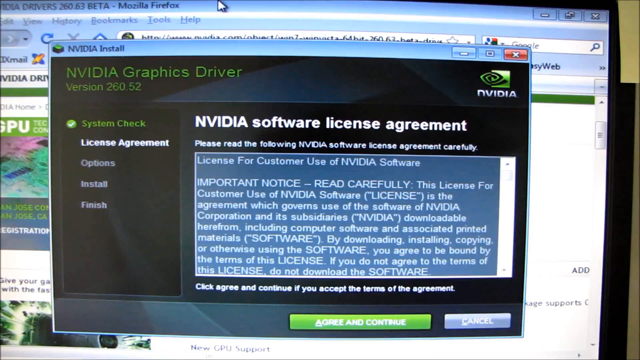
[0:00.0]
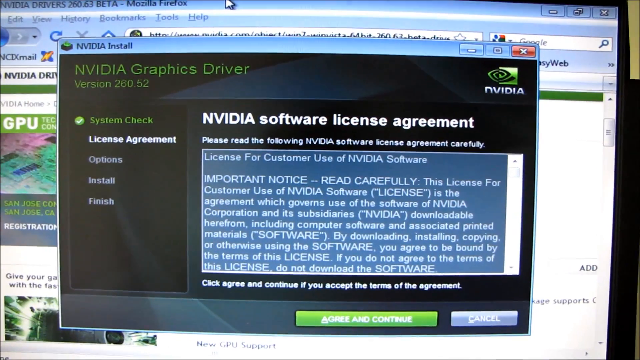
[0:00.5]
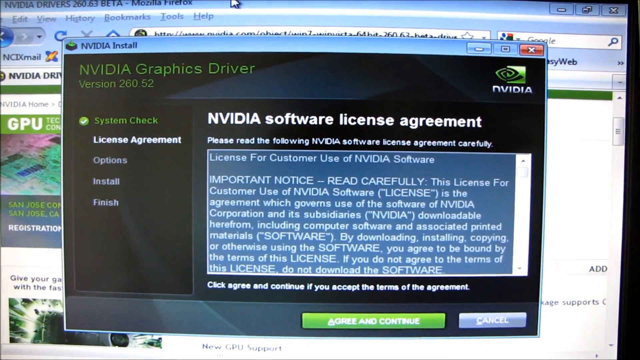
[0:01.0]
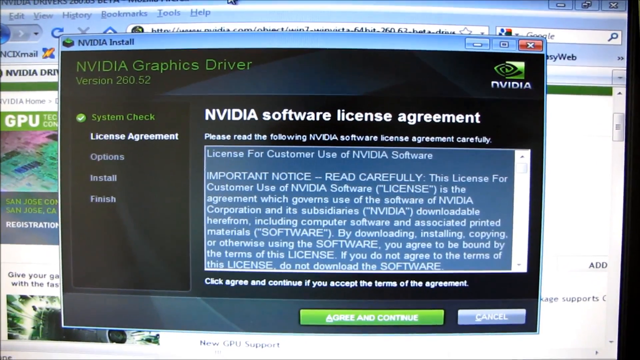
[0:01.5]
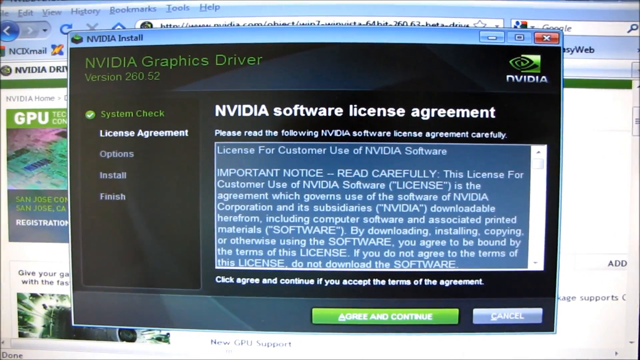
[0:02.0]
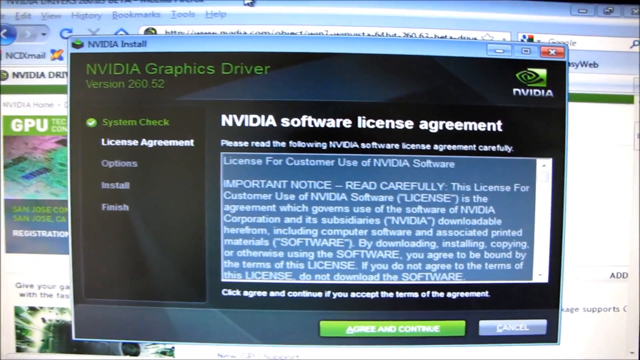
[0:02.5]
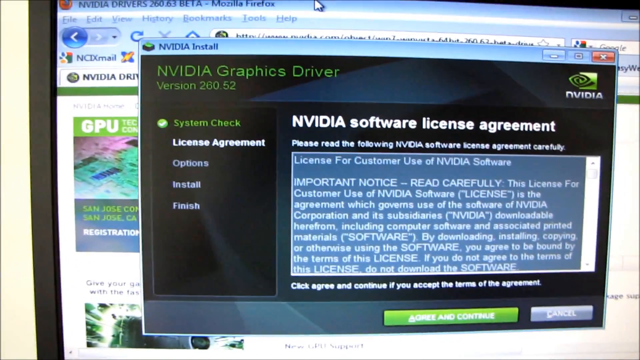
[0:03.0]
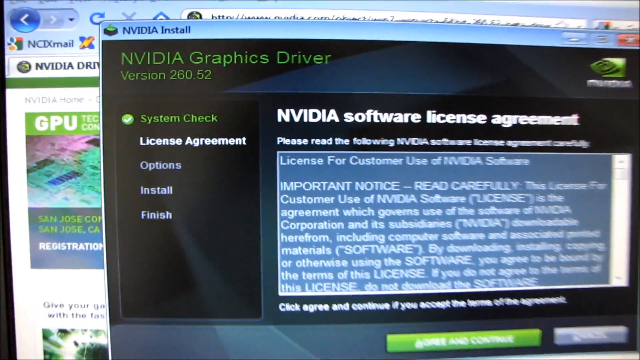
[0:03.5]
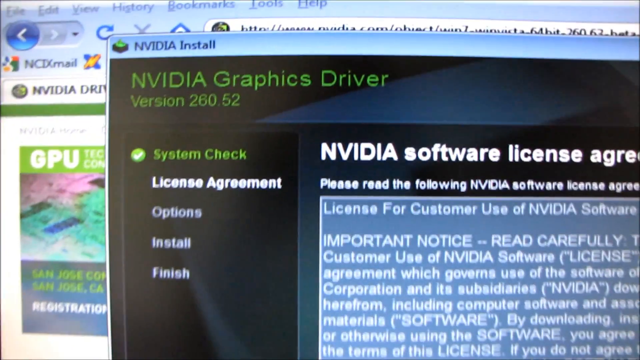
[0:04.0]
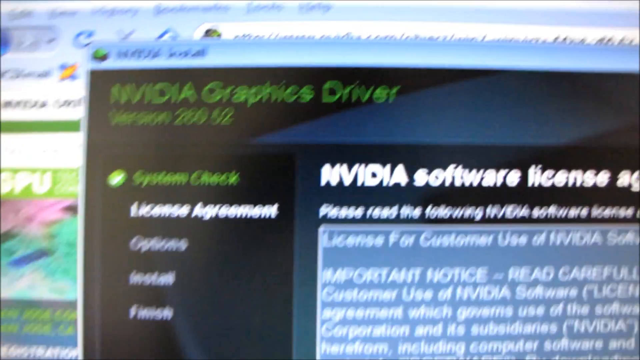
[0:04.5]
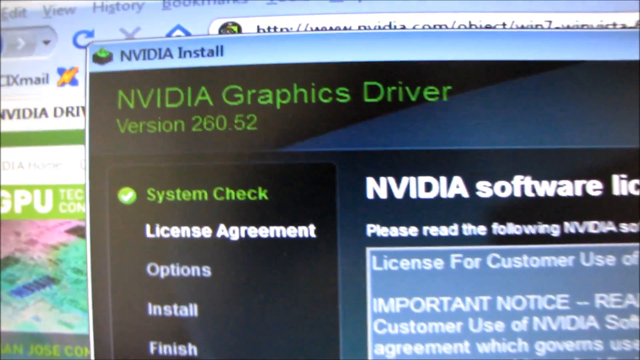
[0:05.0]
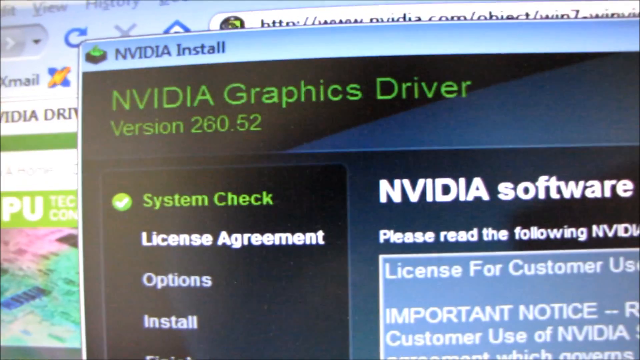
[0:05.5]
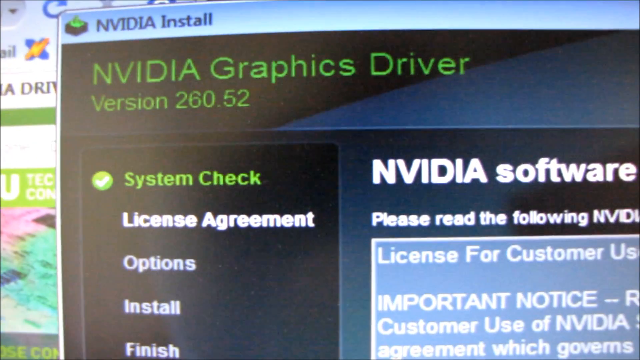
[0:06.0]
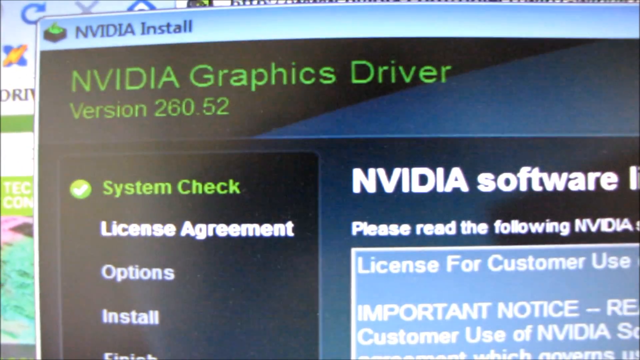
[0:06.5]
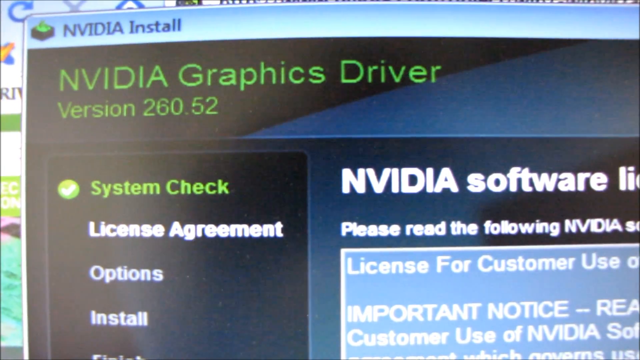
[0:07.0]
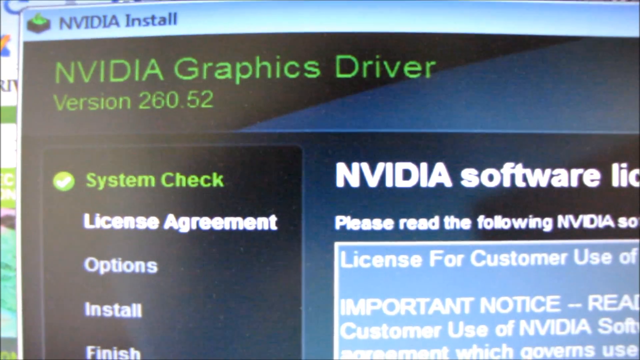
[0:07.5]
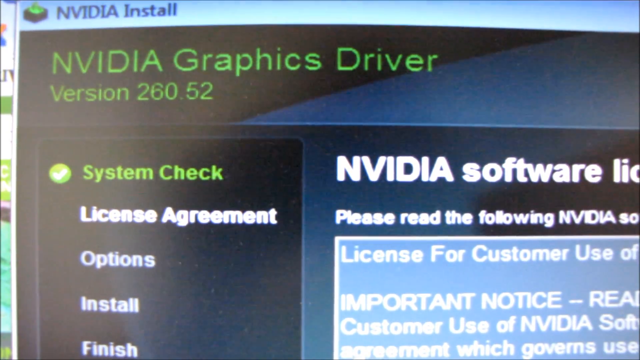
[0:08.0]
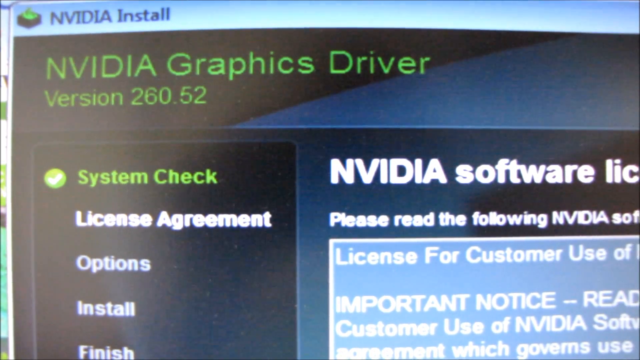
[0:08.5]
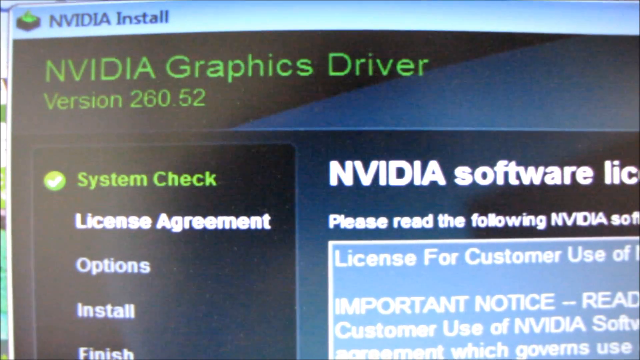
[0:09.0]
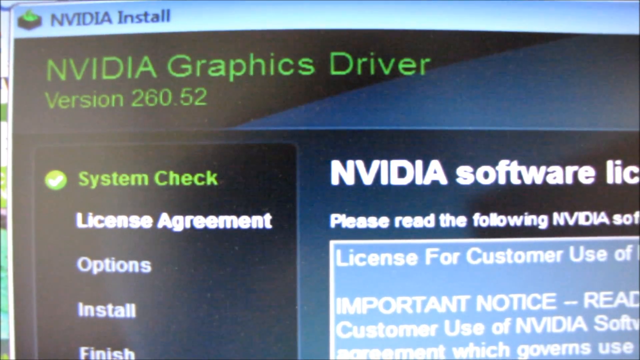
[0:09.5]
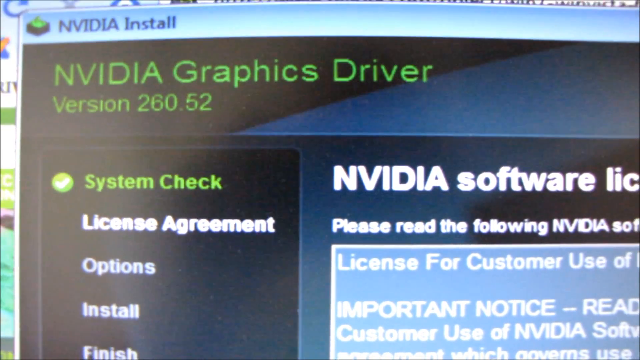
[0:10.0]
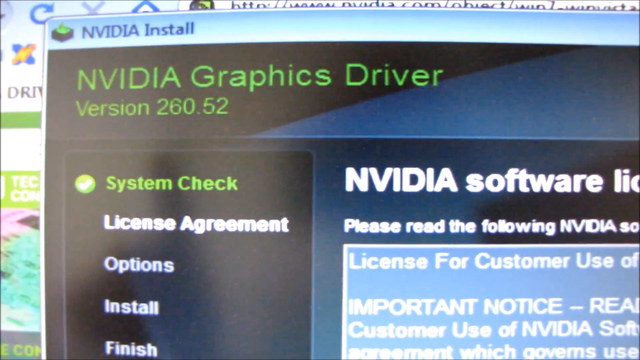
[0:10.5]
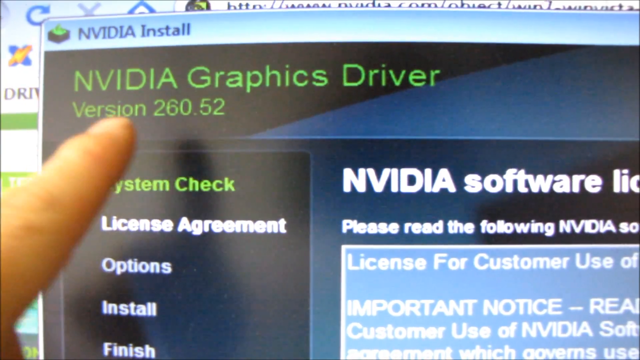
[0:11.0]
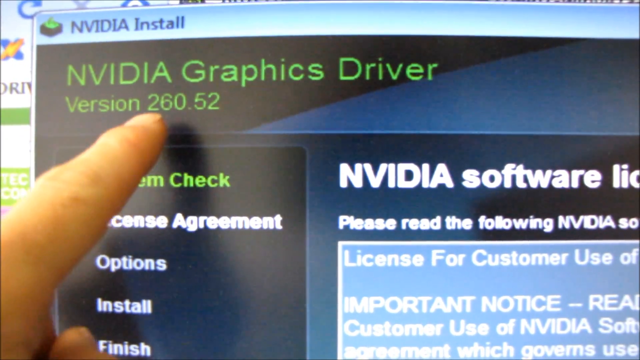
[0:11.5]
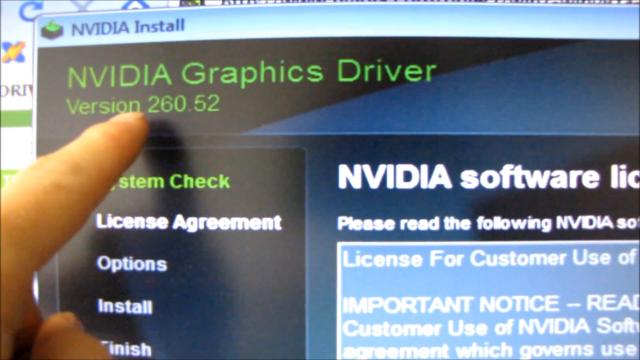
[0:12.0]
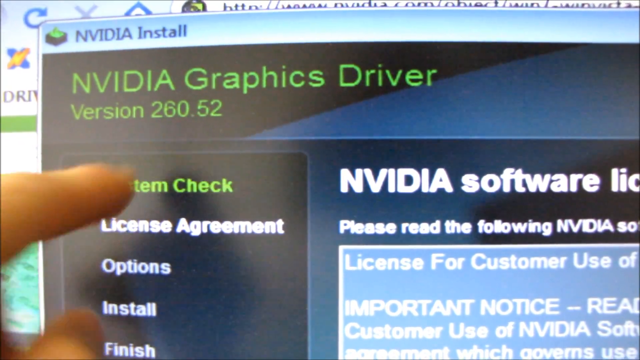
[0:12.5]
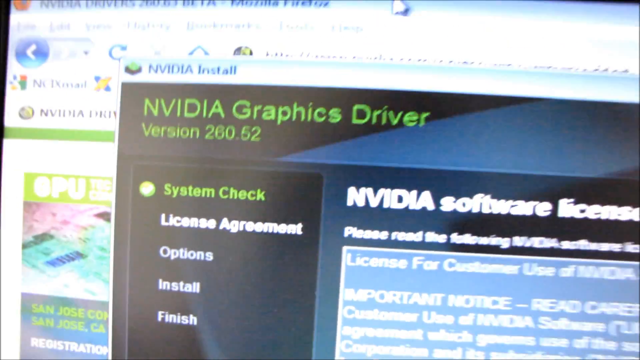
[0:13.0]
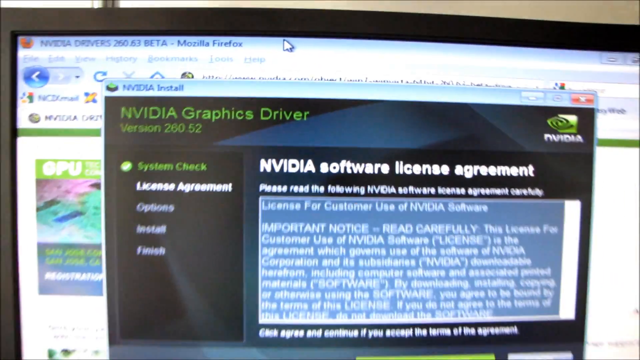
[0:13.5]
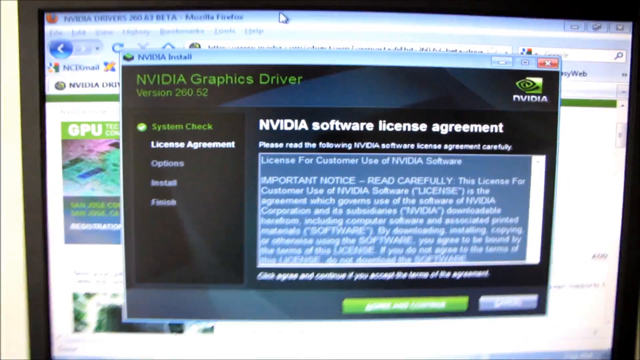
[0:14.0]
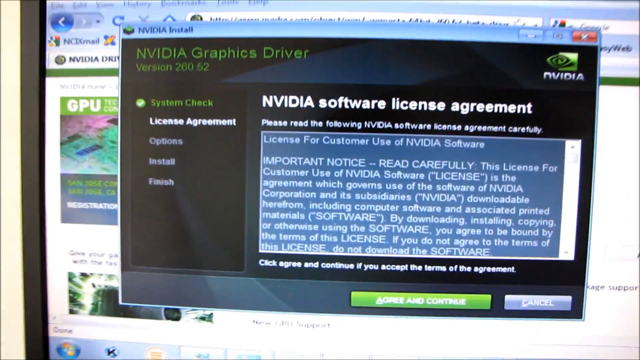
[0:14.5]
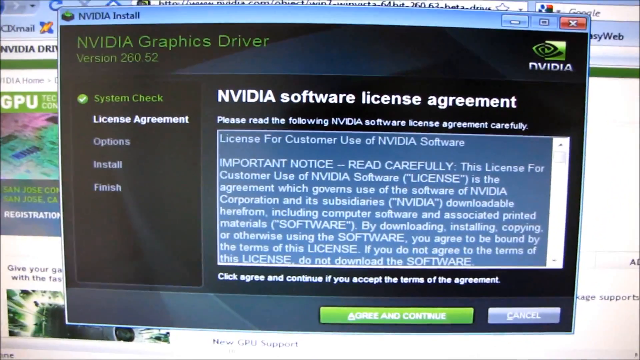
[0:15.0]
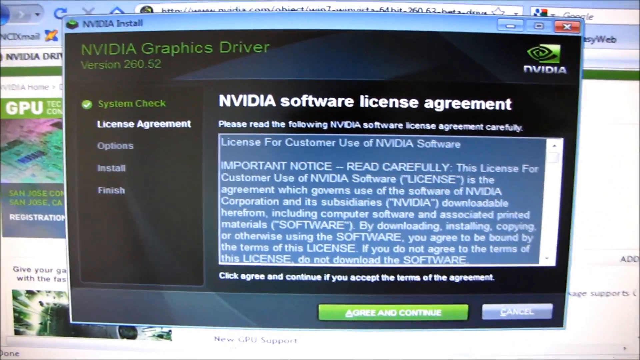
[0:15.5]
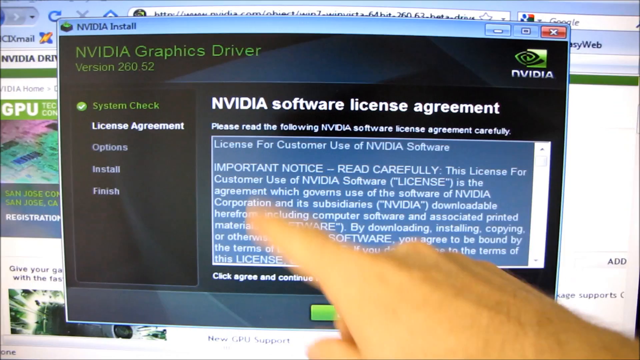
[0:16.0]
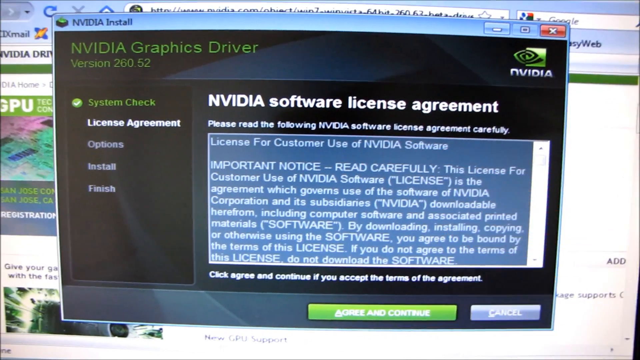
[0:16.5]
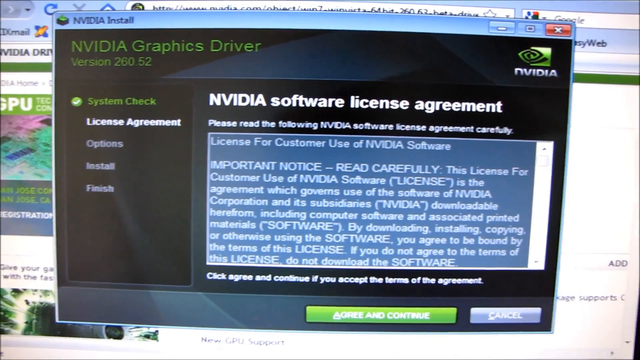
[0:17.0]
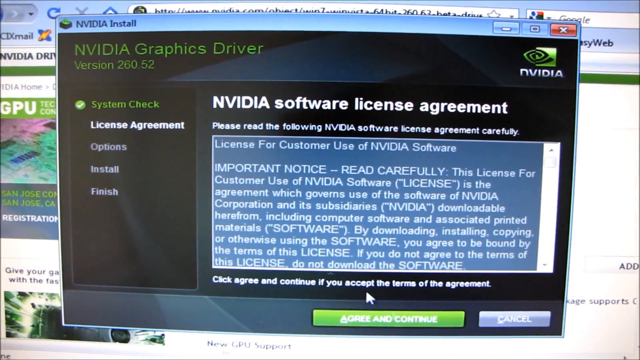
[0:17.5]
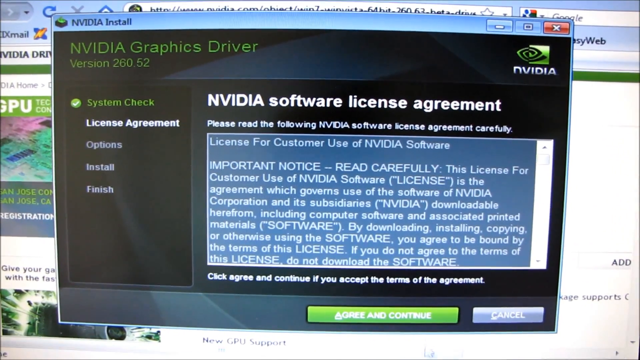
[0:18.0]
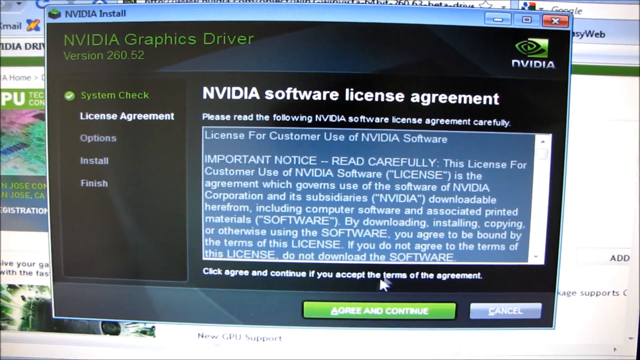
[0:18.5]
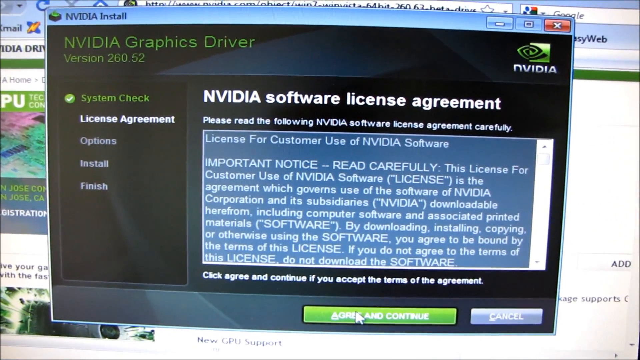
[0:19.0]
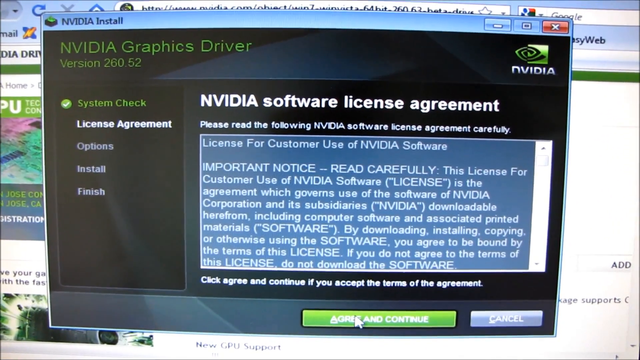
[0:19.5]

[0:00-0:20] A camera records a computer screen. A Firefox browser window is open in the background, while an installation window for an NVIDIA graphics driver is displayed prominently in the center. The shot begins on the entire screen, then after a few seconds the camera zooms in on the top right corner of the installation window, where the text "NVIDIA graphics driver version 260.52" appears in green on a black background. The person points to the version number with the left index finger and moves back and forth across it as if underlining it. The camera then zooms out to show the whole installation window, and the person's right hand points to the software license agreement, a large scrollable text box with a great deal of white text on a light blue field. The person scrolls to the bottom and clicks a green button labeled "continue" with the mouse cursor.